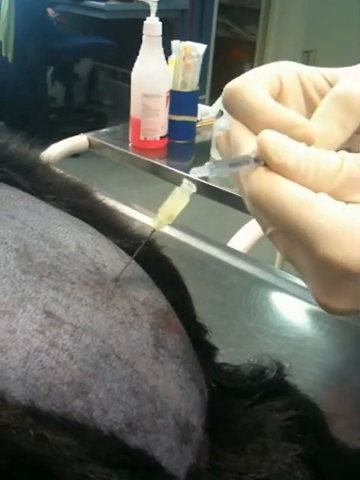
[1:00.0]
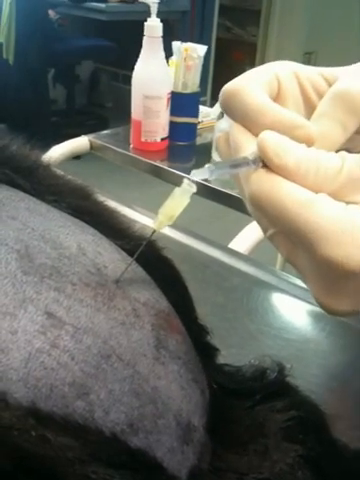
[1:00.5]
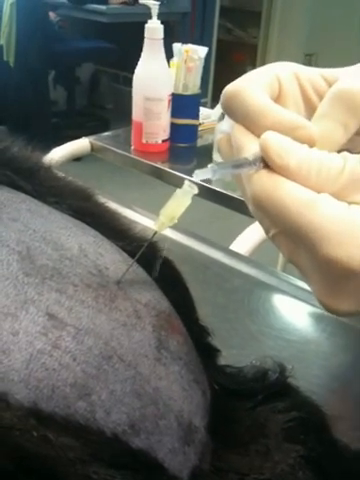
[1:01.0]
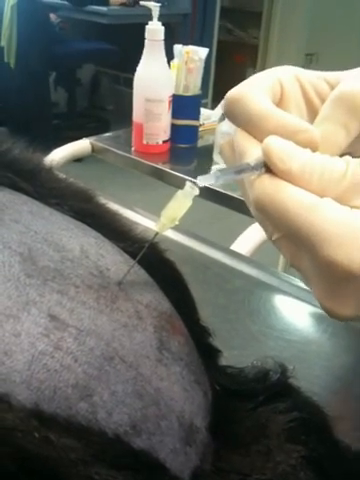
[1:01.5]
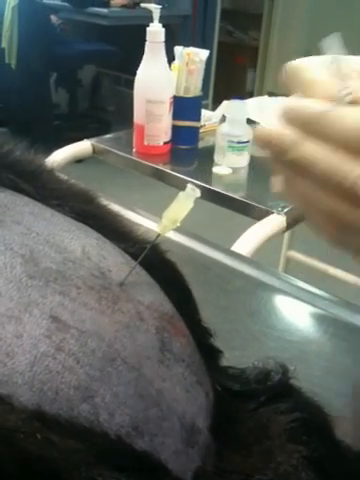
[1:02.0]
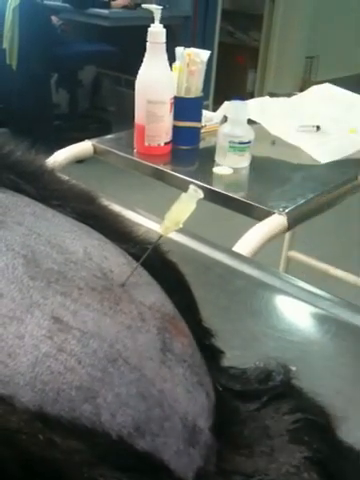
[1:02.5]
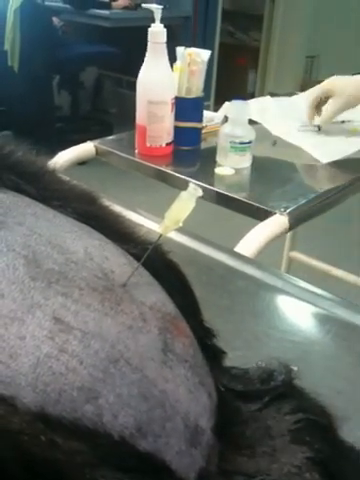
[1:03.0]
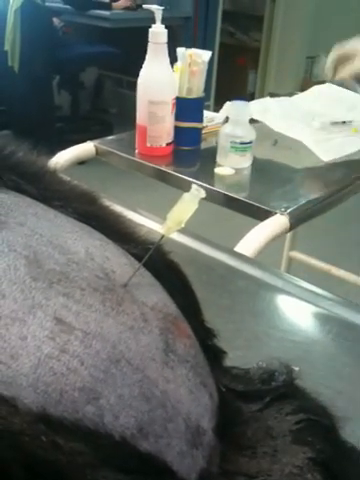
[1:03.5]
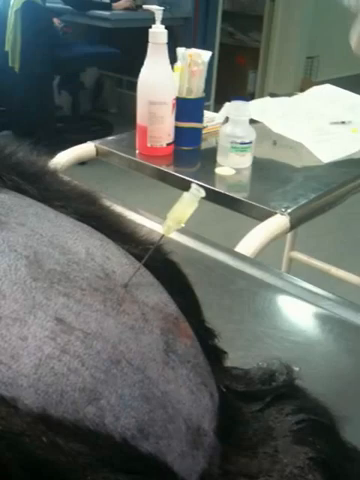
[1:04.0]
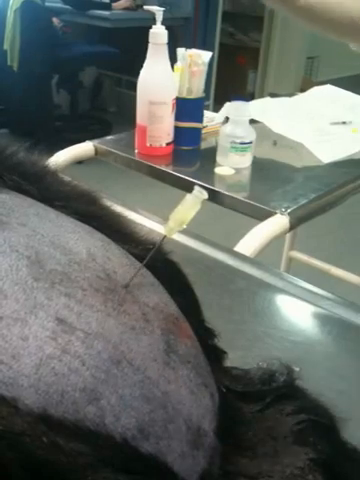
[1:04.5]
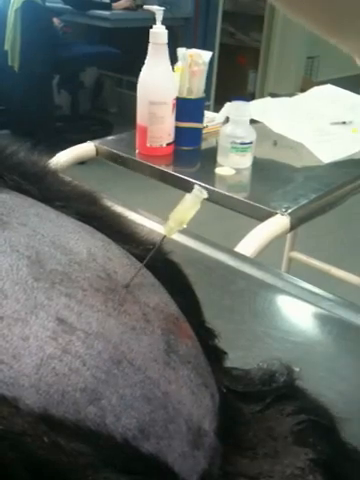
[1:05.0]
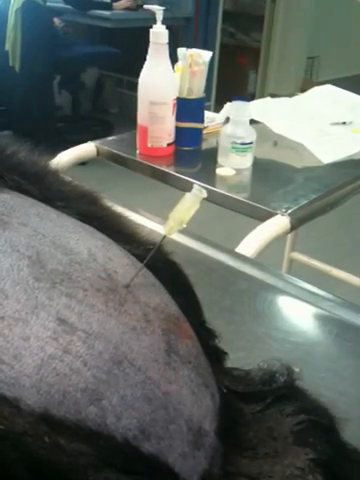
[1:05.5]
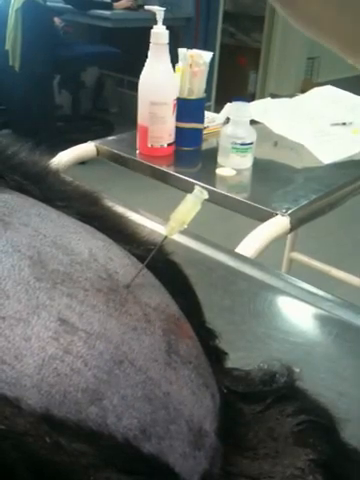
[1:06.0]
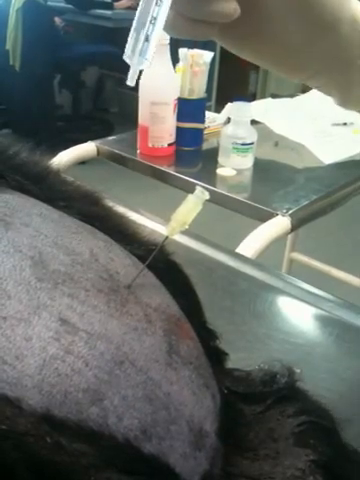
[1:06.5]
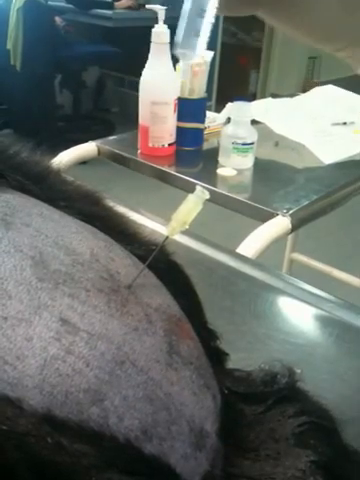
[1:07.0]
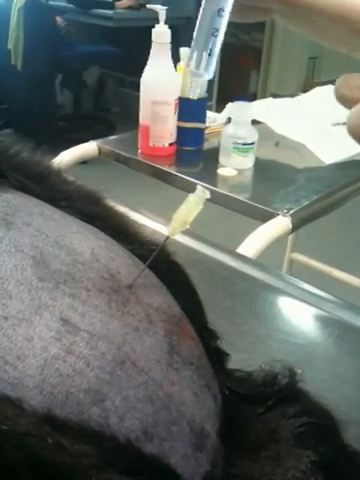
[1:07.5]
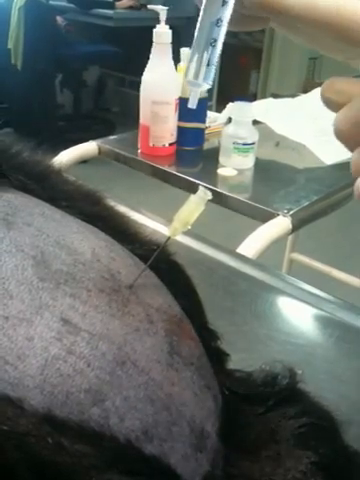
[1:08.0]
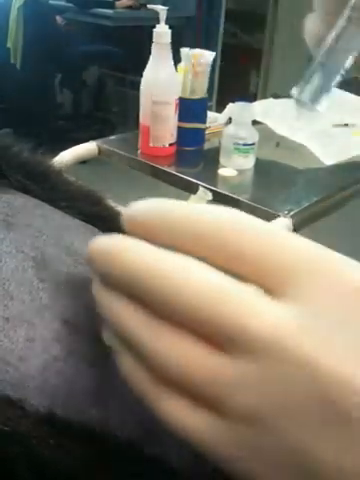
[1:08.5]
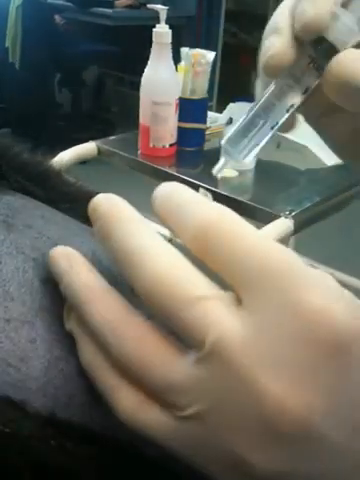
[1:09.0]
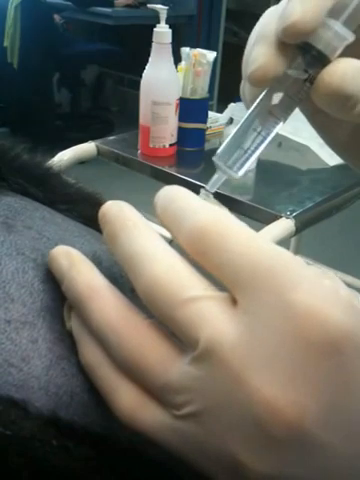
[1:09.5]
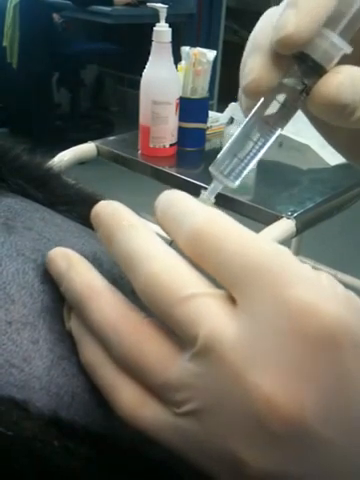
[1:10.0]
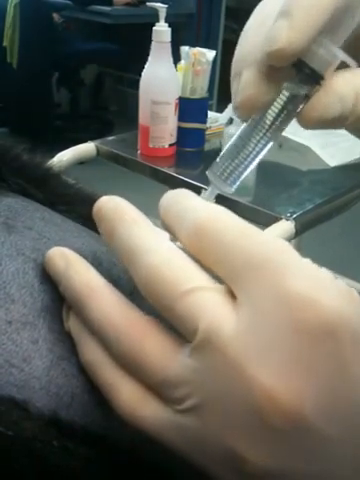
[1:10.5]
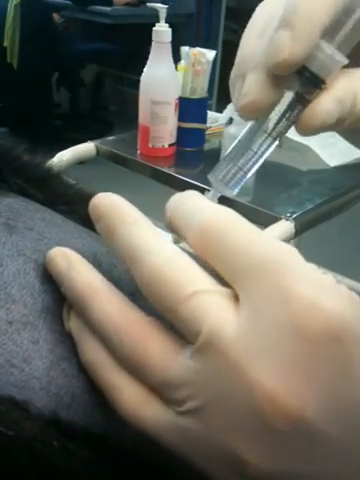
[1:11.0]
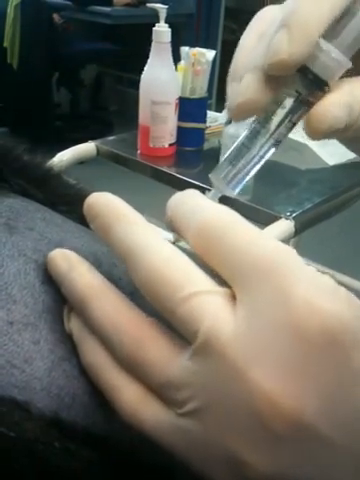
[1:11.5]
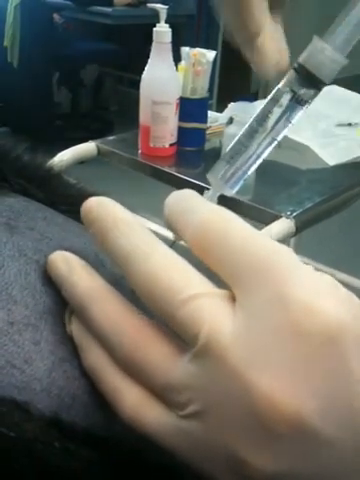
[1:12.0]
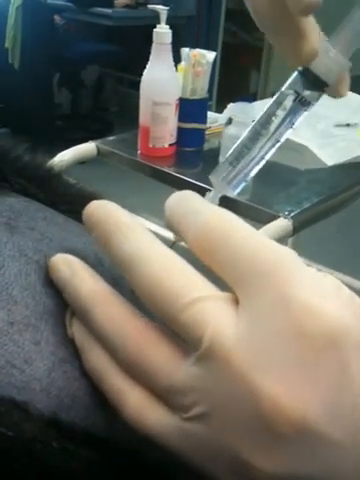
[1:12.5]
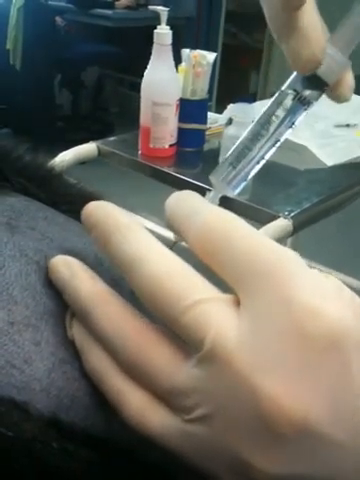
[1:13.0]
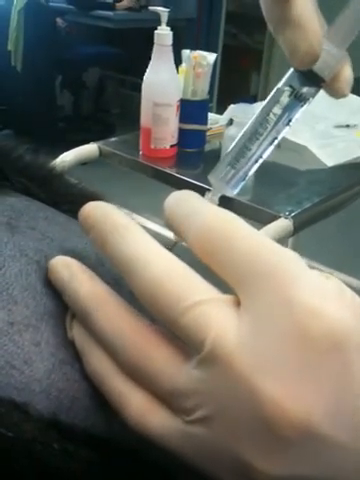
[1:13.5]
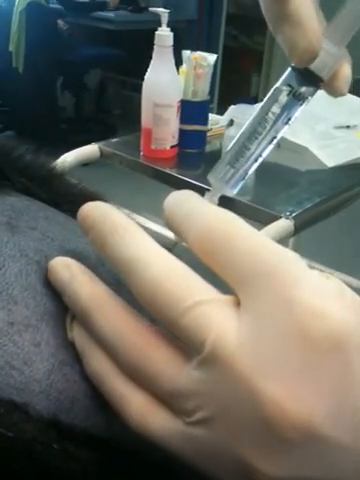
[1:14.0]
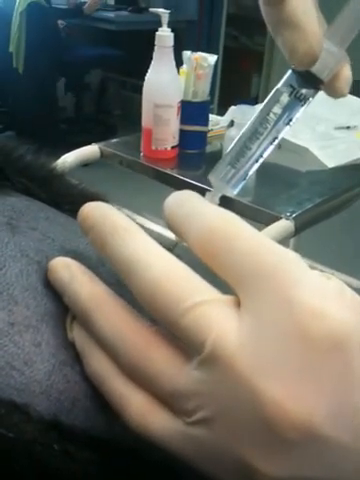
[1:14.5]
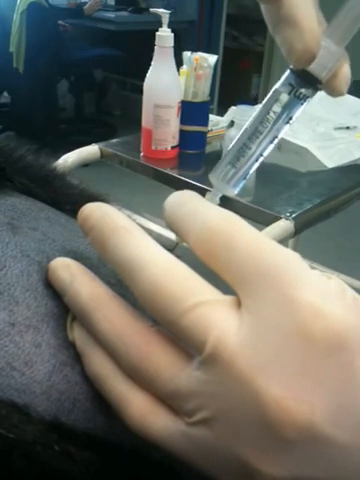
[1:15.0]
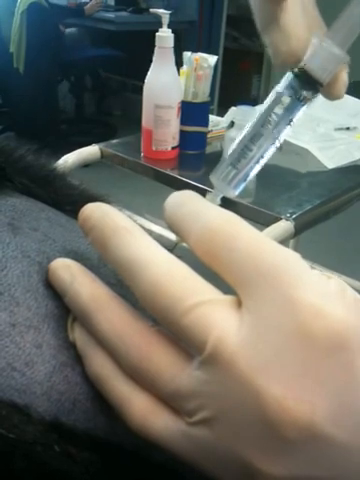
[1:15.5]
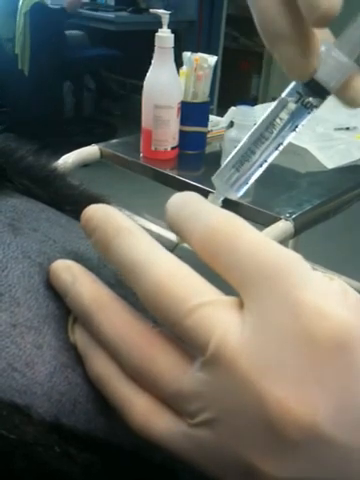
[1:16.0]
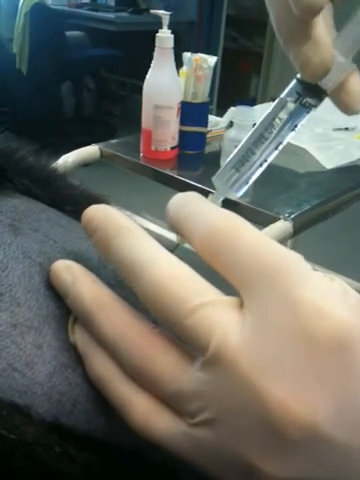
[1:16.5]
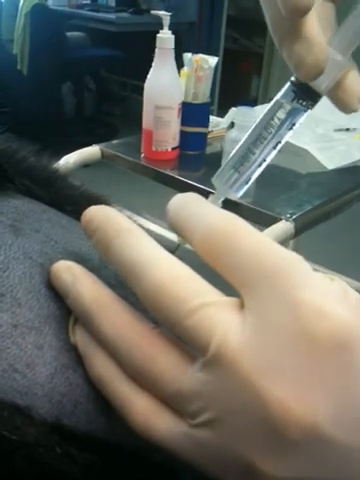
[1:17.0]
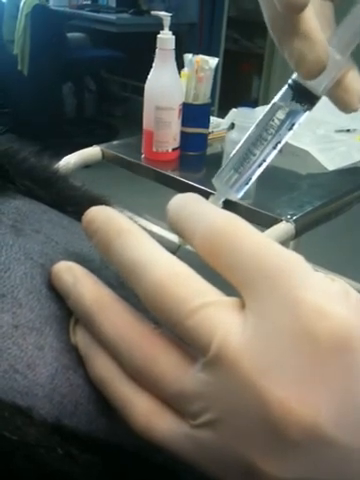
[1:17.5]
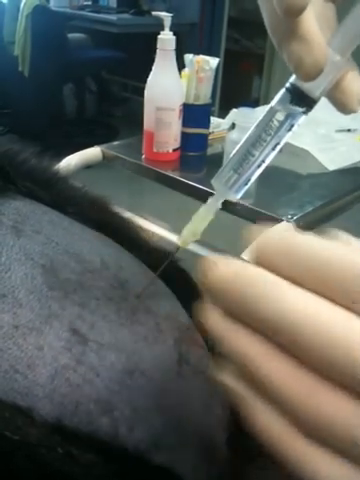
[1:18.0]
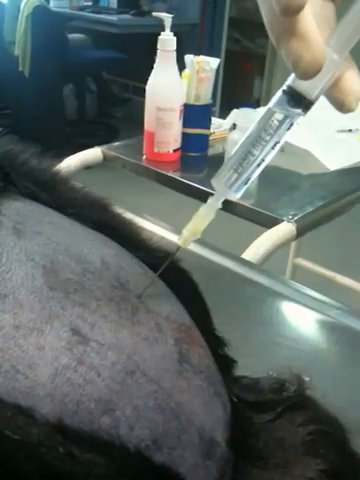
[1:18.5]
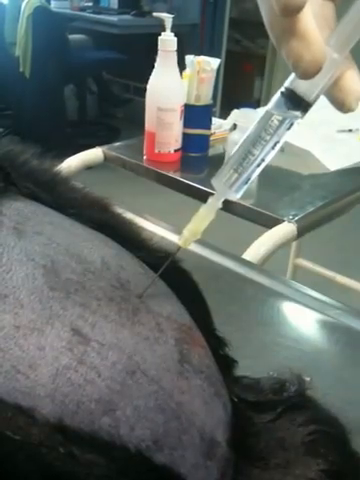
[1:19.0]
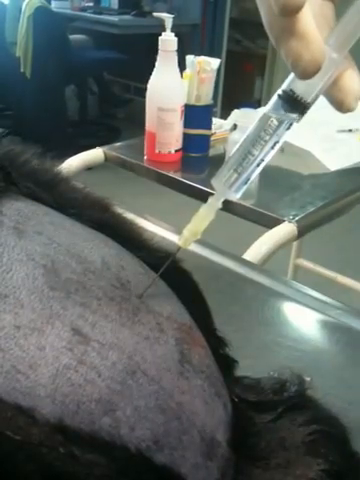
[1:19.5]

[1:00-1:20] In the veterinary surgery, the dog is on a table being looked after. Using gloved hands, the vet adds liquid from a pipette into a plastic top above a needle or tube inserted deeply into the animal's rump. One droplet misses the plastic top and falls onto the dog's skin, while the rest goes into the plastic top. The vet puts the pipette down on the trolley and brings a larger syringe filled with clear liquid. The vet carefully inserts the syringe into the plastic top above the needle or tube, secures it by pushing the syringe and the plastic top together, and then pushes on the syringe to add the liquid slowly through the tube as the liquid level goes down in the syringe.